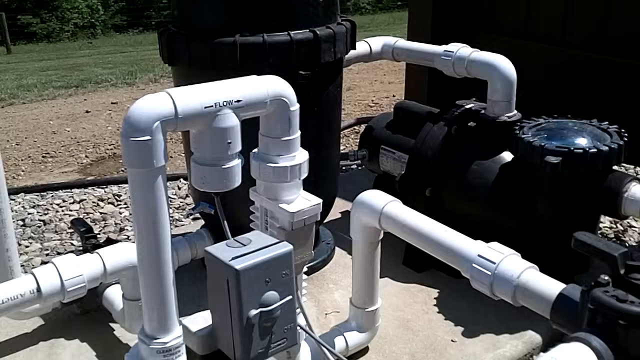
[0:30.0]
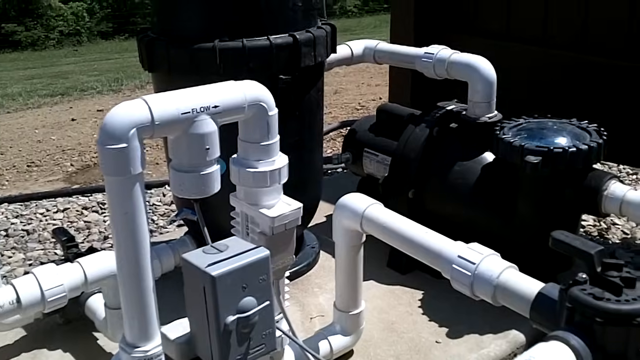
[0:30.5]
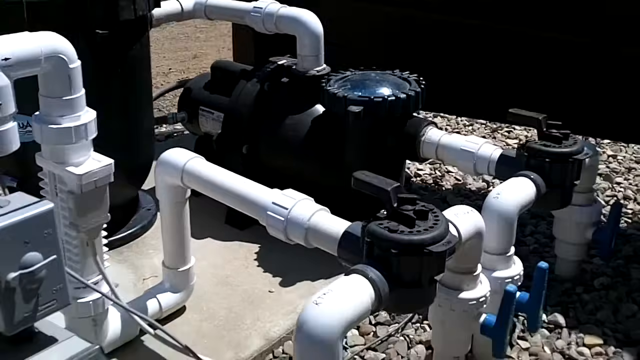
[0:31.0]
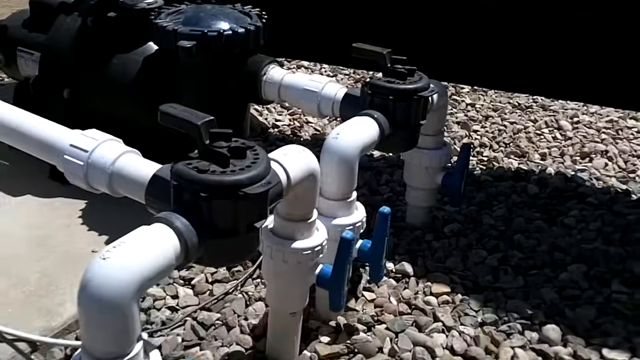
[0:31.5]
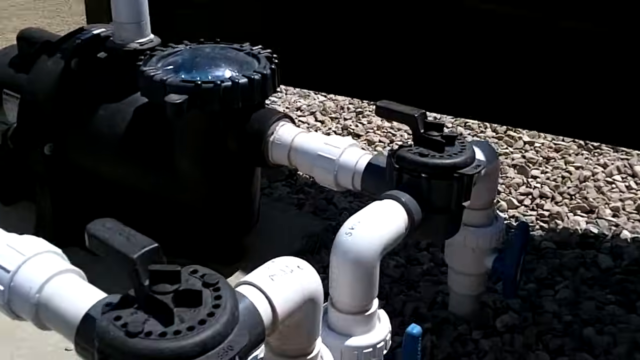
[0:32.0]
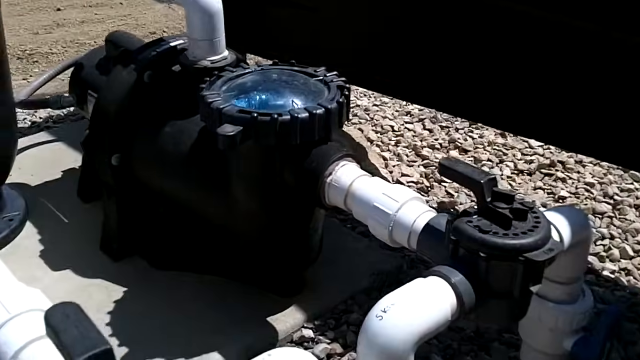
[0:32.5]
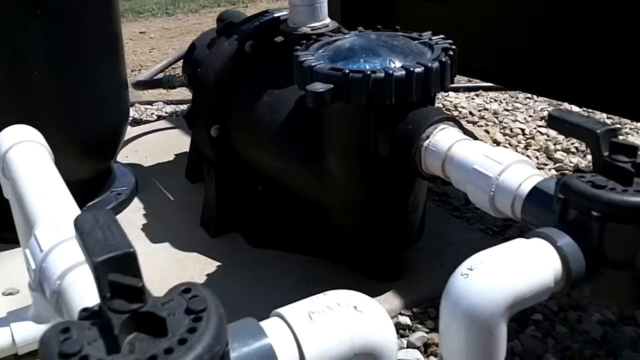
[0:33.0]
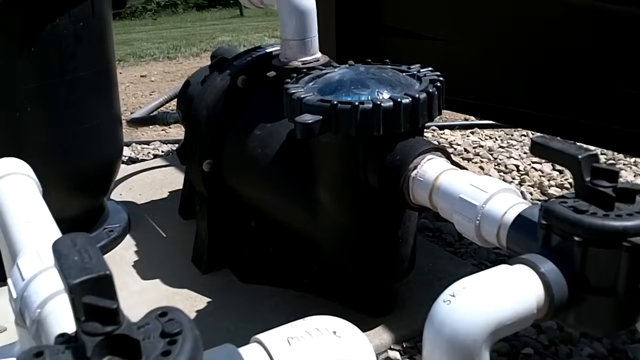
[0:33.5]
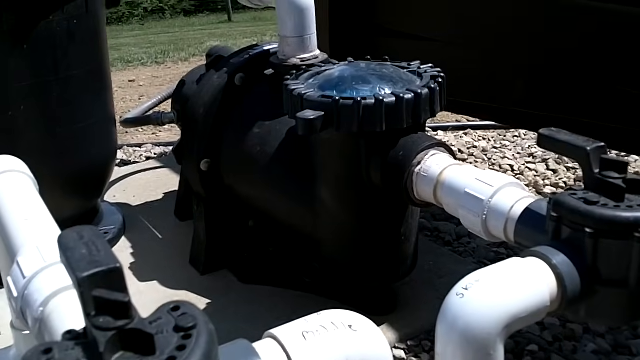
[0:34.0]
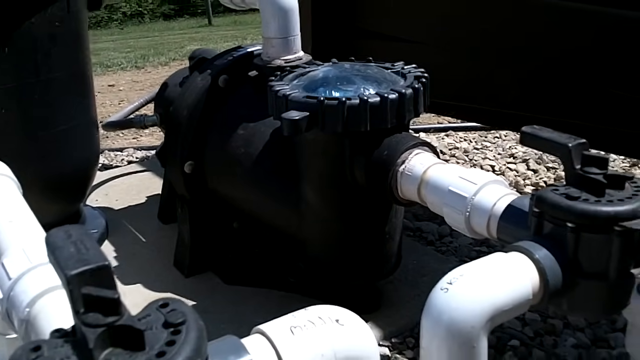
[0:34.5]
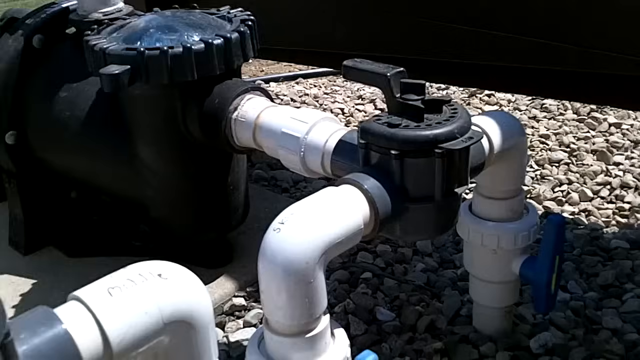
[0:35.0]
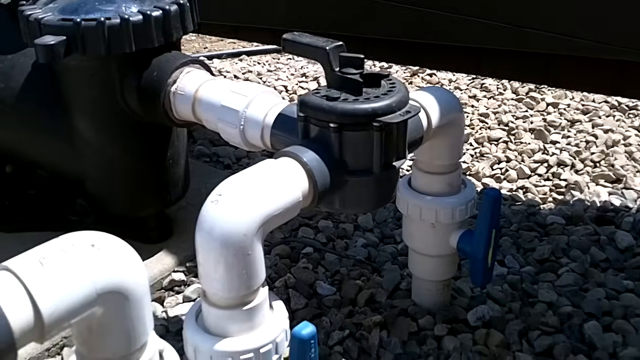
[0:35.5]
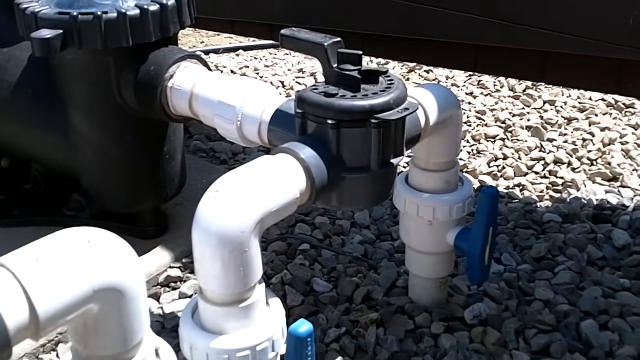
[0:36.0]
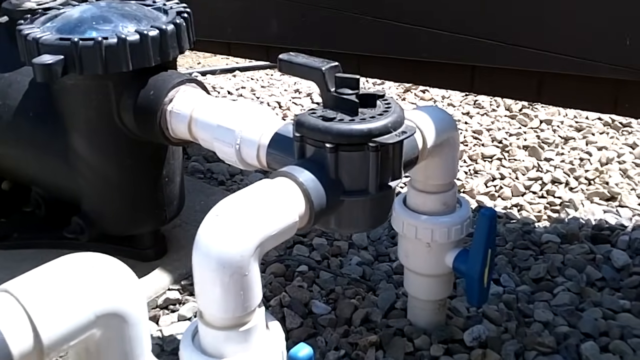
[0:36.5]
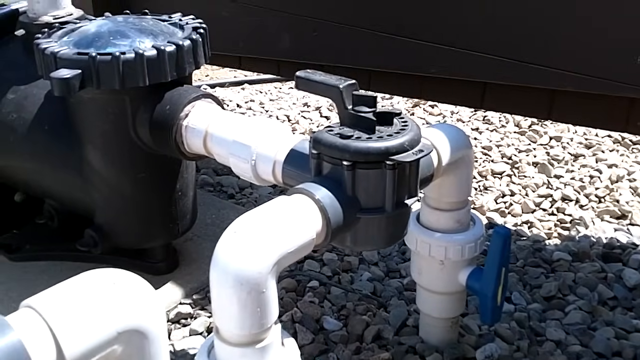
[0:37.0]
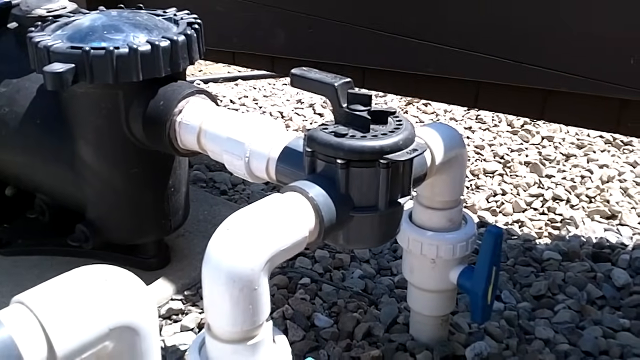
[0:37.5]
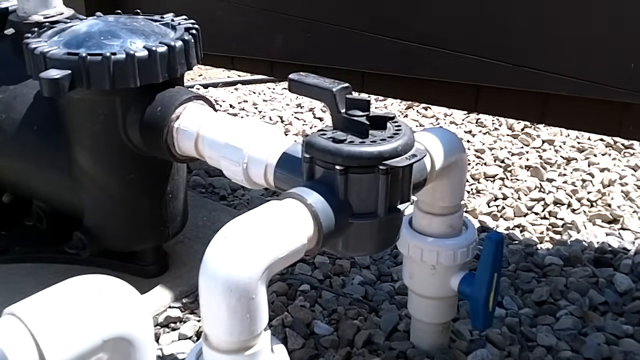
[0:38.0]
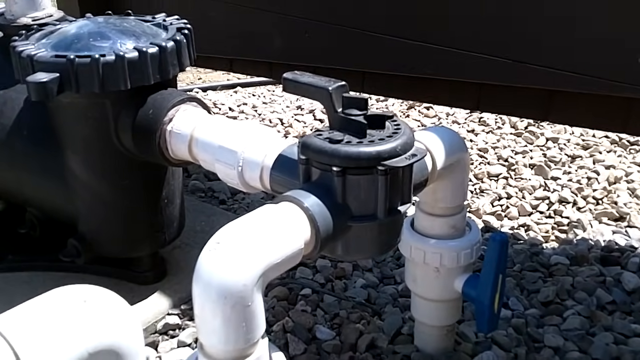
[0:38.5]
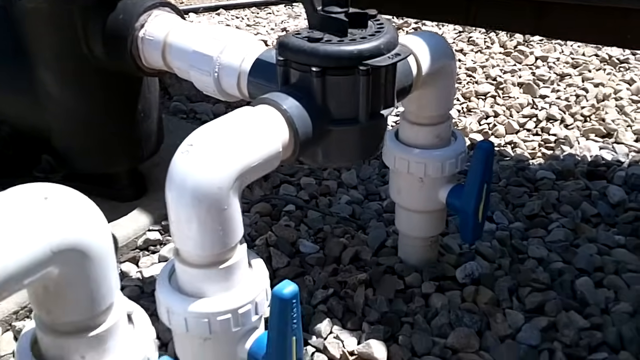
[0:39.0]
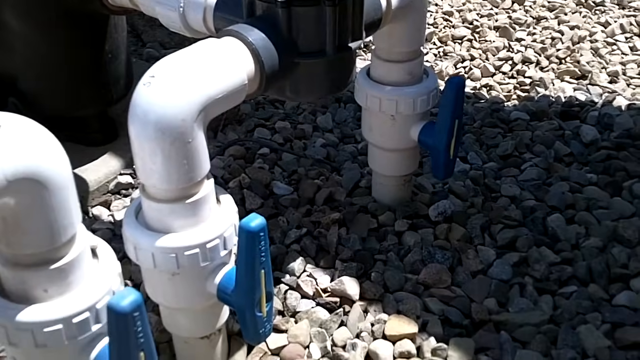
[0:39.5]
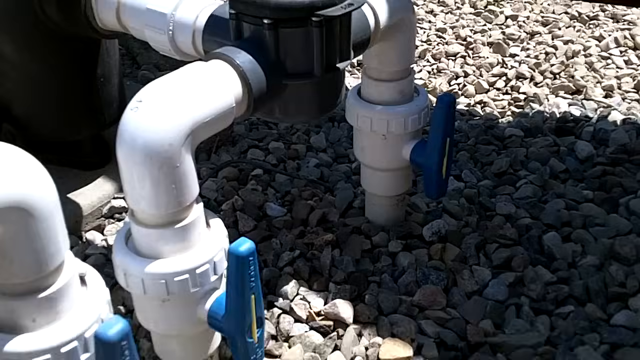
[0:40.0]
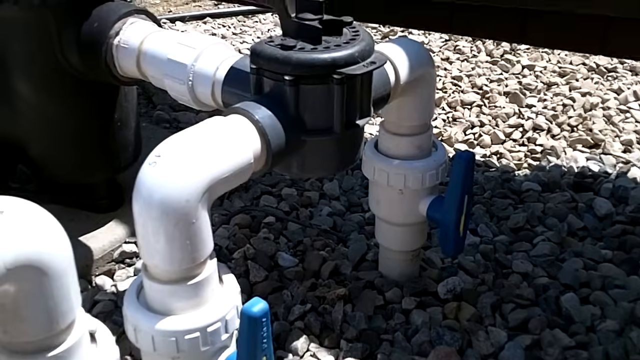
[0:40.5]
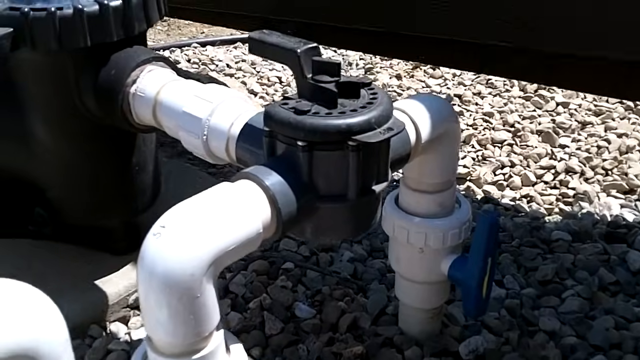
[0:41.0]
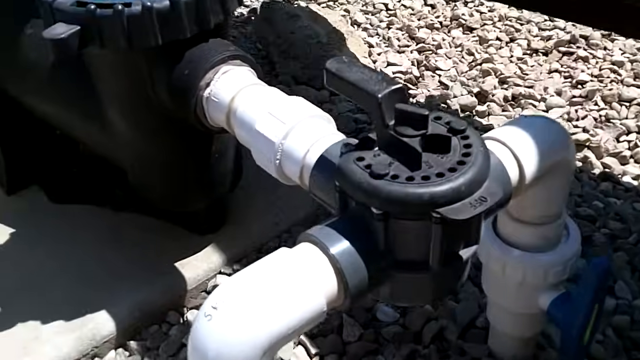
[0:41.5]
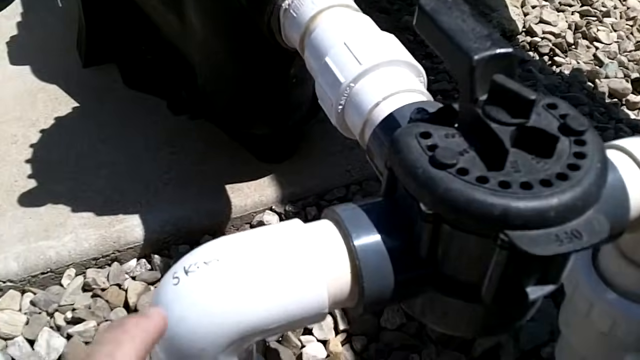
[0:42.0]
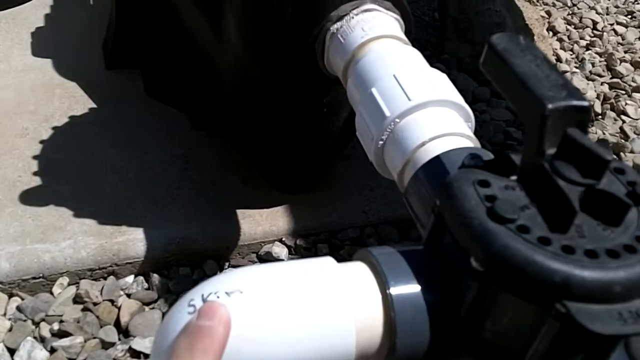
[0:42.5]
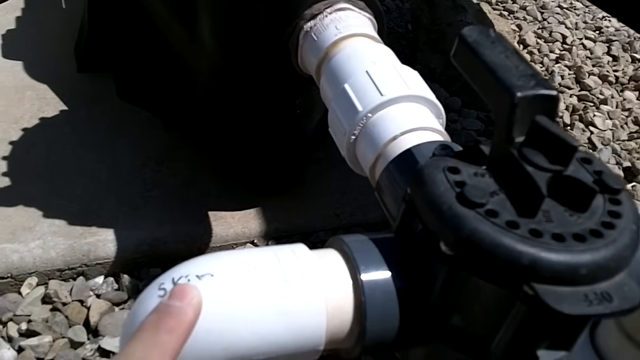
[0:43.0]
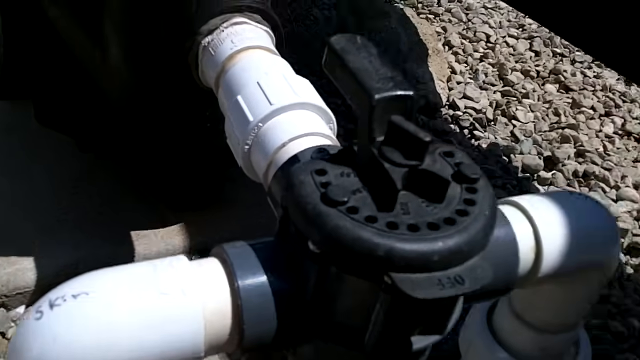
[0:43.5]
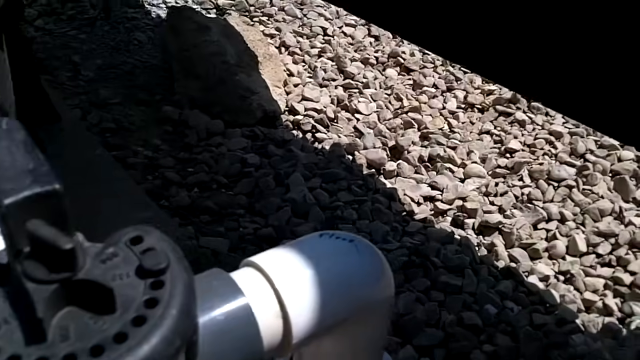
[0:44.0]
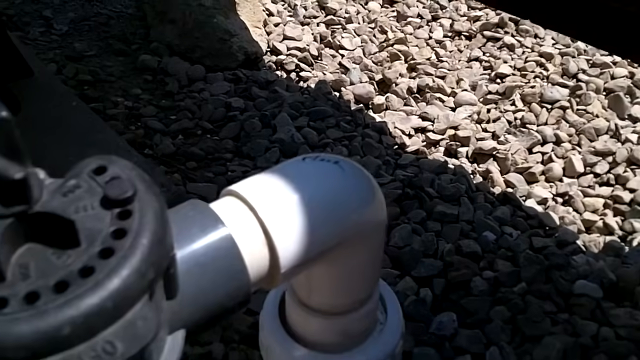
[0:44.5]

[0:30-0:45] The view focuses on the black apparatus with the circular cylindrical glass coating, along with more white piping. A finger comes on screen, the left hand pointing to the piping. There is another close-up of one of the black cylinders and the lever on top. The finger points to something on the tubing that almost looks like a word or some letters, hard to read as it goes by quickly, maybe "skim". This is a focused zoom in on this particular portion of the apparatus, perhaps calling attention to specific controls and functions. Rocks on the ground show light and shade, and the person's hand comes on screen to point to a call-out on the product.